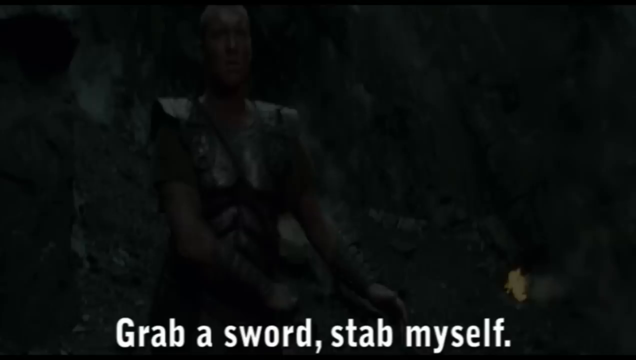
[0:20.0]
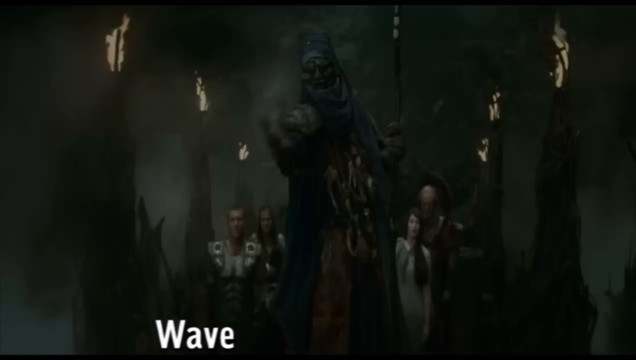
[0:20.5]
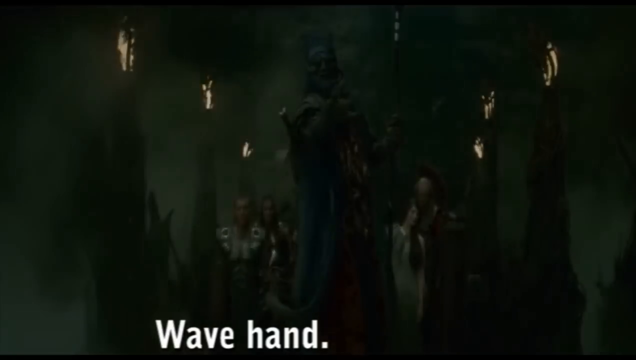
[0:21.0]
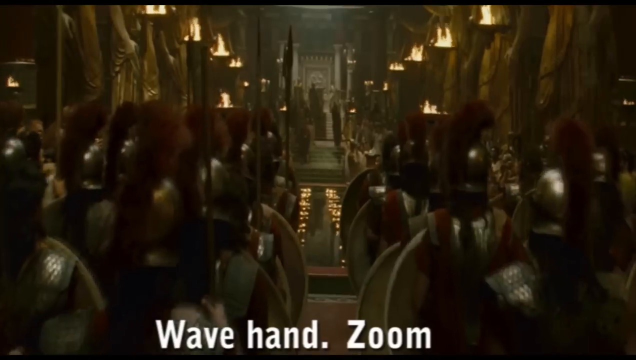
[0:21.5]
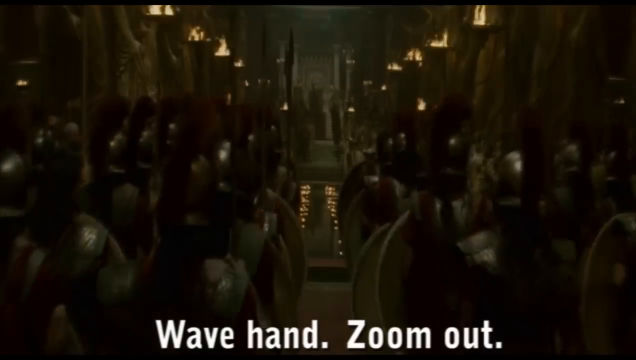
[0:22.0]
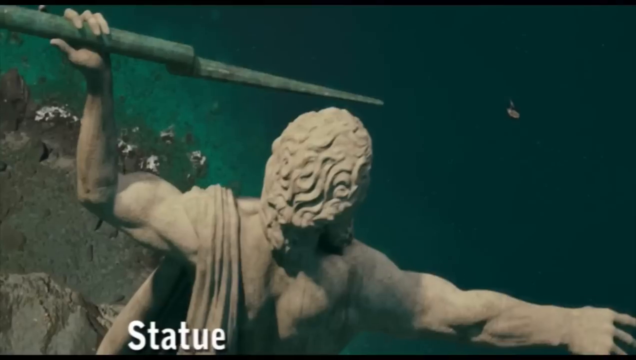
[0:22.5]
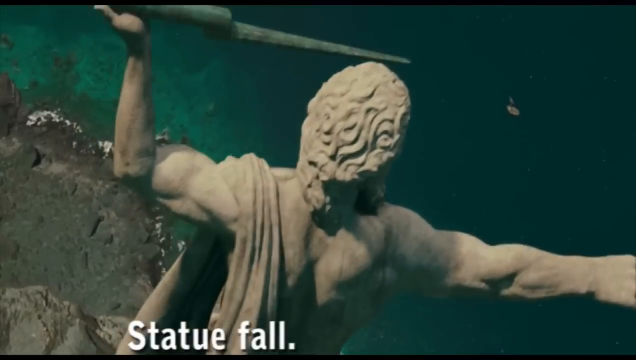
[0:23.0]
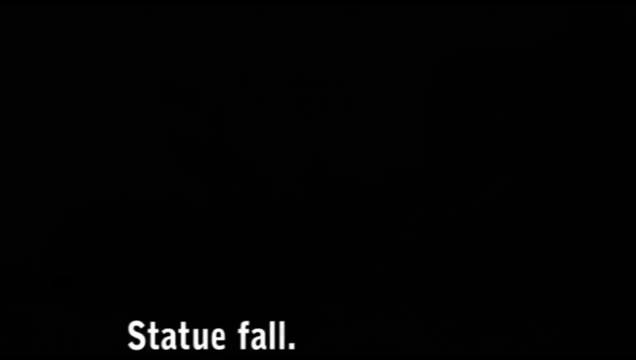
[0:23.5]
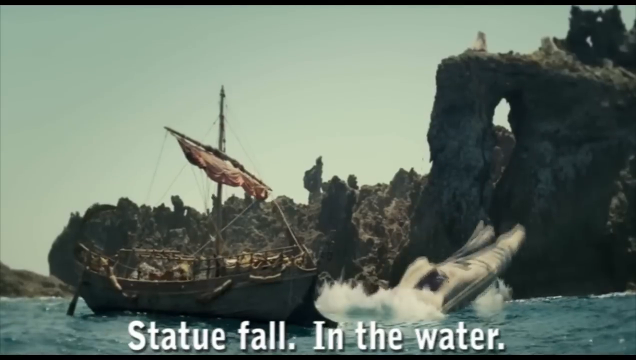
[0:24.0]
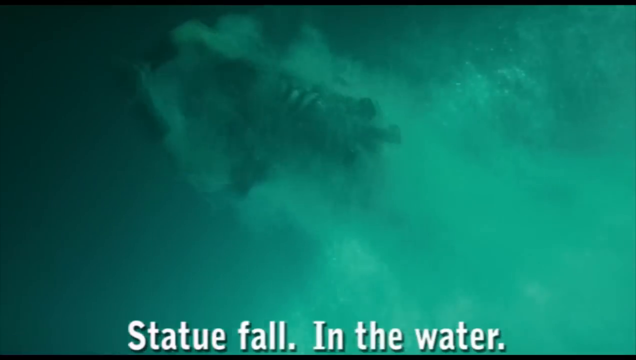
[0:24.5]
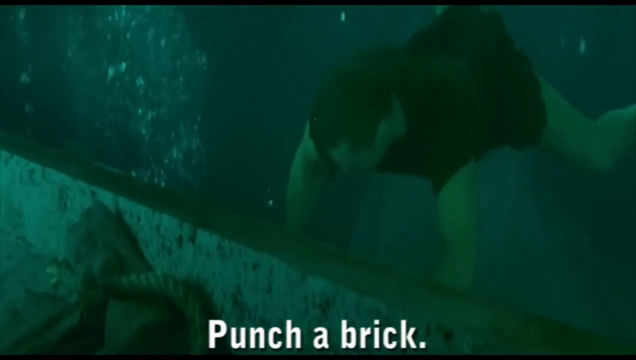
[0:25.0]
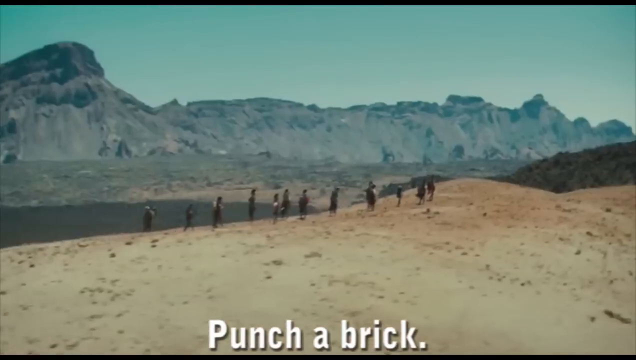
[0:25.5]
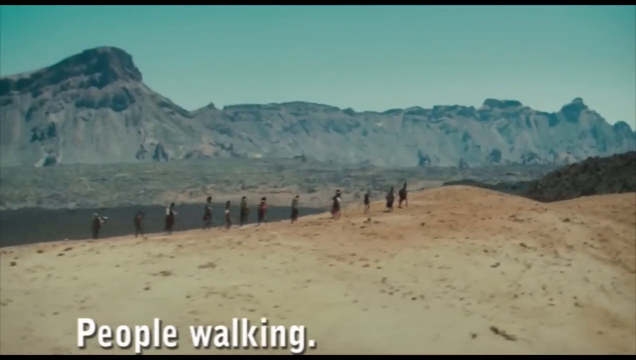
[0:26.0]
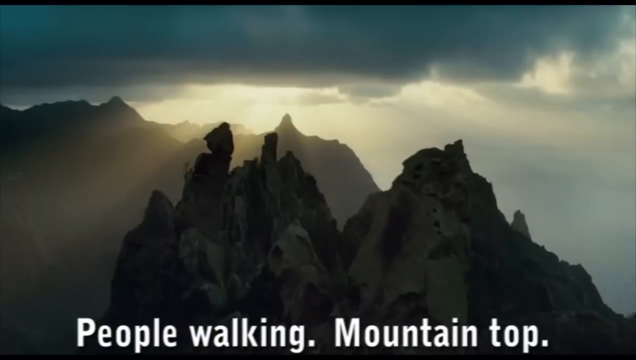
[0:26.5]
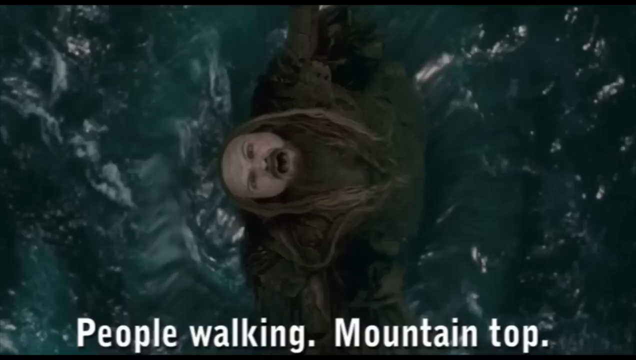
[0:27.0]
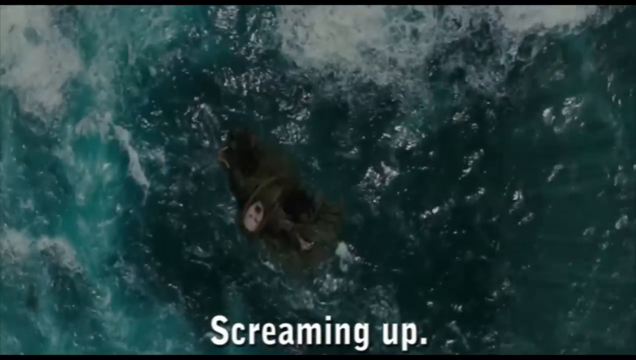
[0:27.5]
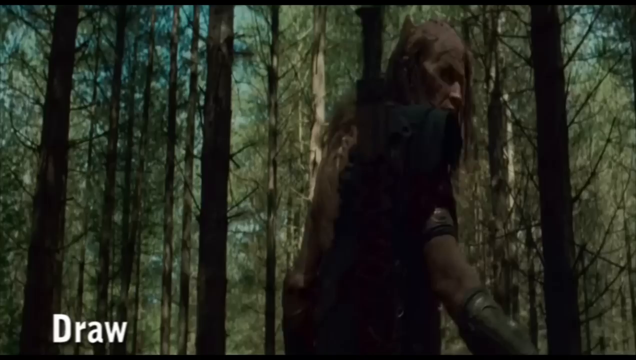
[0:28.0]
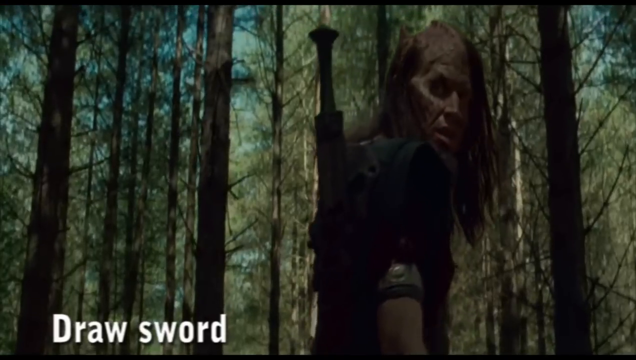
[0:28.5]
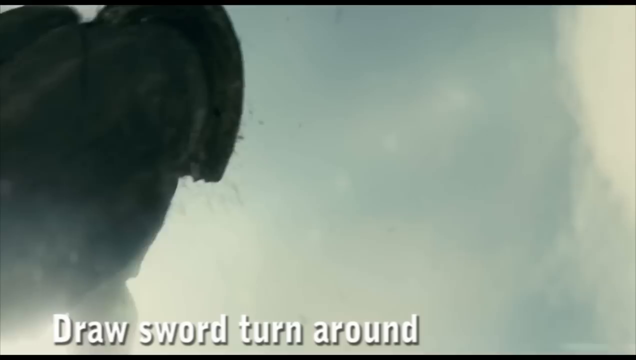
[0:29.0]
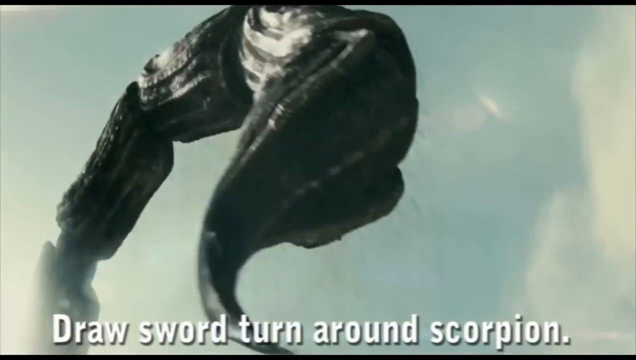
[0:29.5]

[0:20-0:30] A man wearing a turban holds a lit torch. Many soldiers are lined up, wearing wine-colored garments with feathers and holding shields. A statue with one hand holding a spear appears. The view pans out to a boat as it falls into the river close to the boats, and underwater there is a woman. A group of people walks across a deserted space with mountains in the background. A man points a sword, and another man with a disfigured face looks around with a sword strapped to his back. A very huge scorpion tail appears and moves around as the scene changes to a man running in a forest.